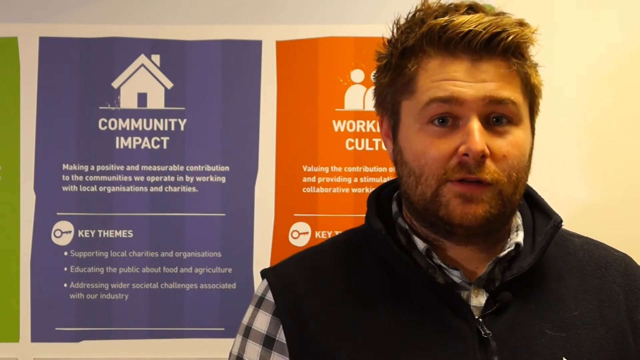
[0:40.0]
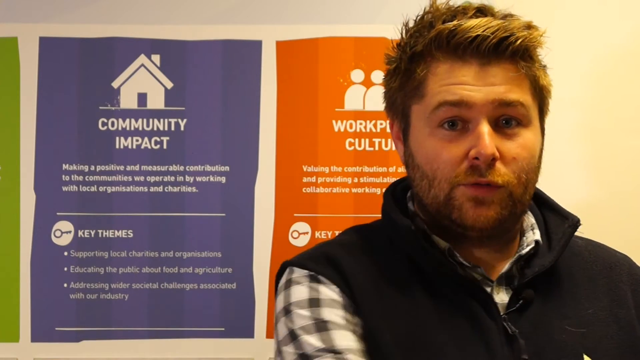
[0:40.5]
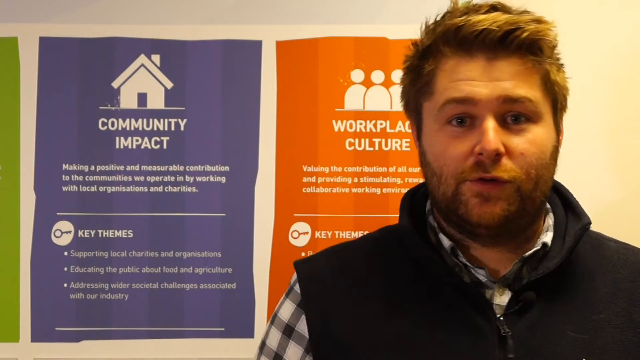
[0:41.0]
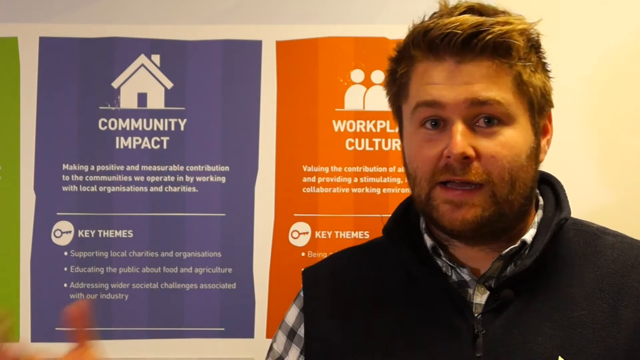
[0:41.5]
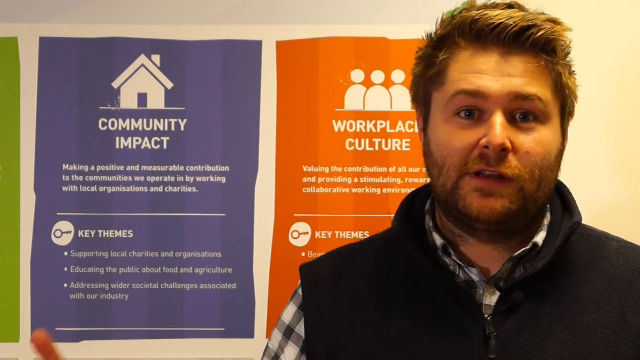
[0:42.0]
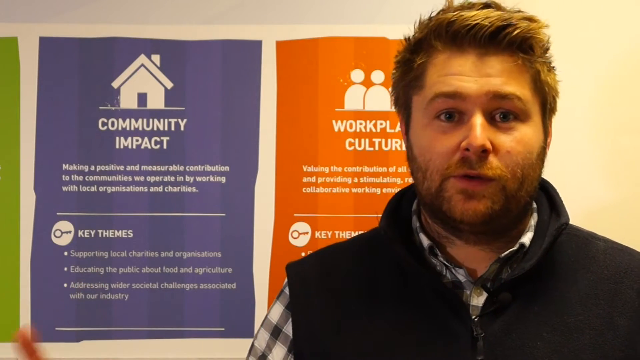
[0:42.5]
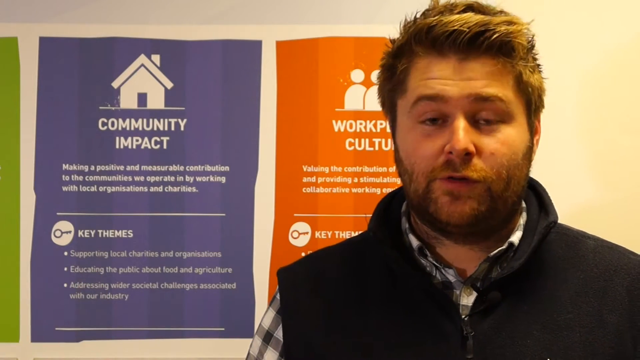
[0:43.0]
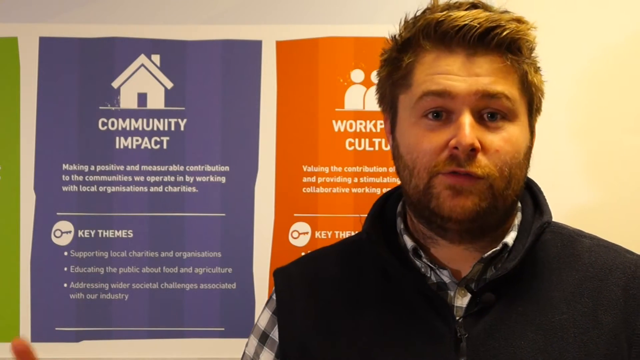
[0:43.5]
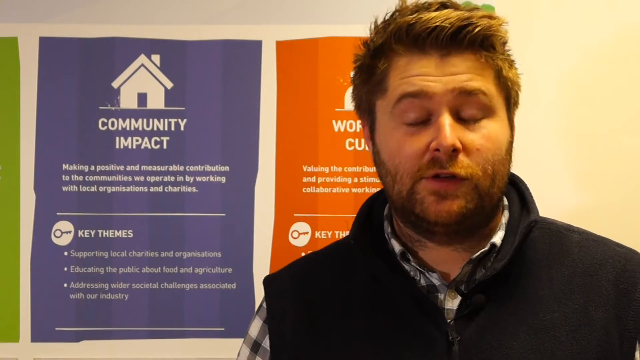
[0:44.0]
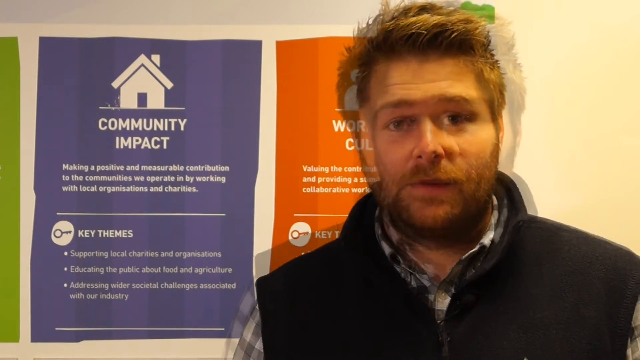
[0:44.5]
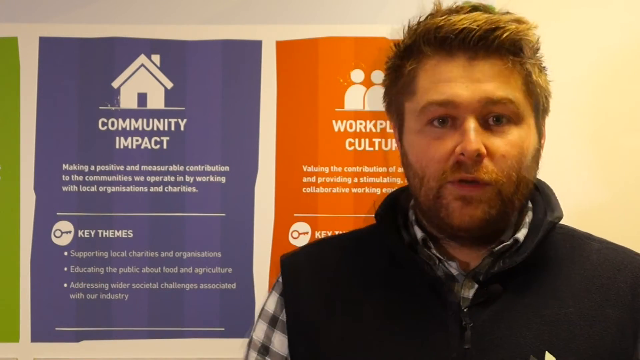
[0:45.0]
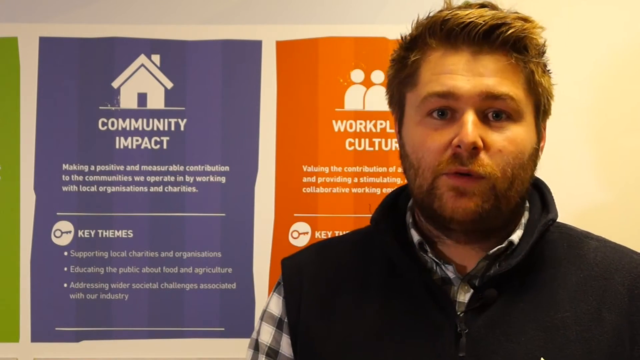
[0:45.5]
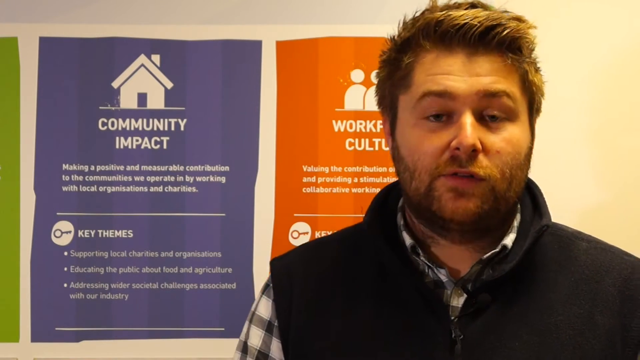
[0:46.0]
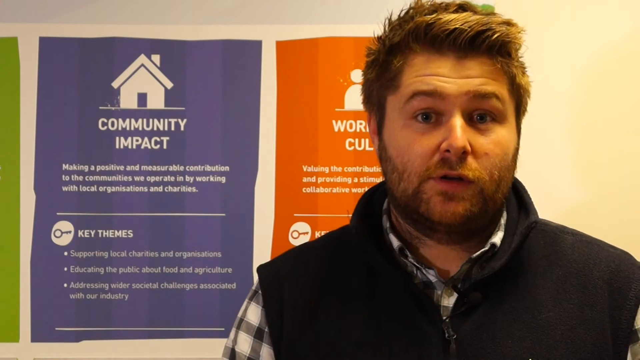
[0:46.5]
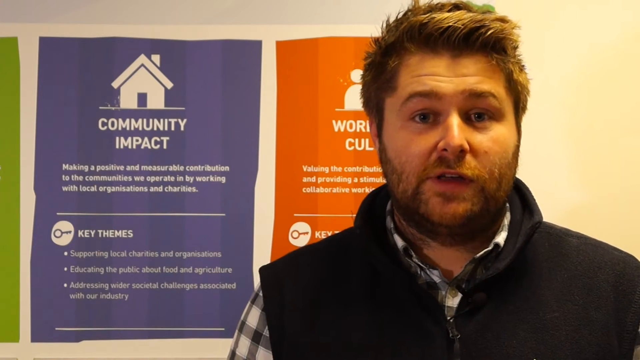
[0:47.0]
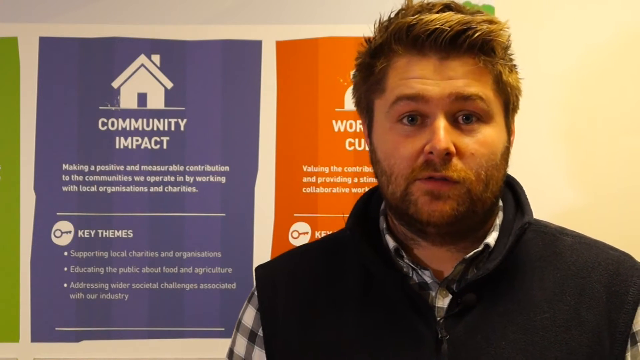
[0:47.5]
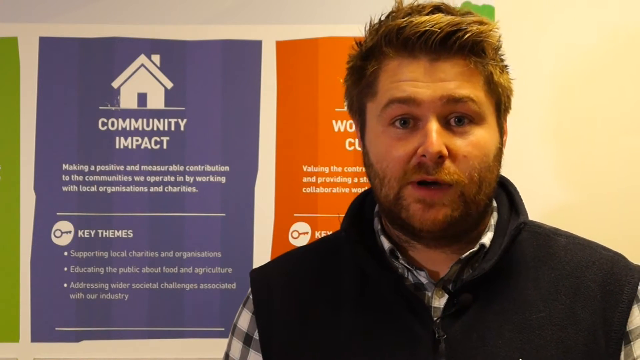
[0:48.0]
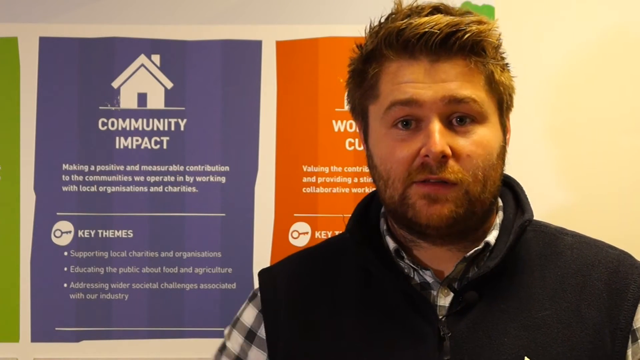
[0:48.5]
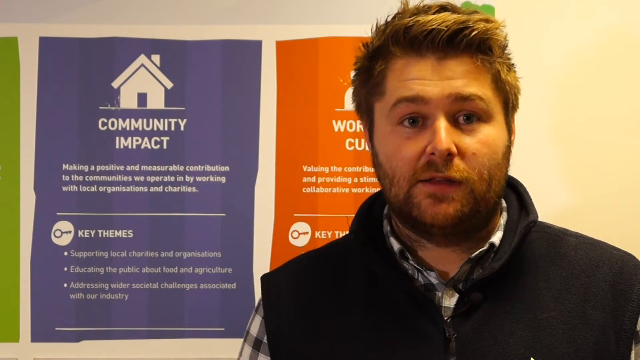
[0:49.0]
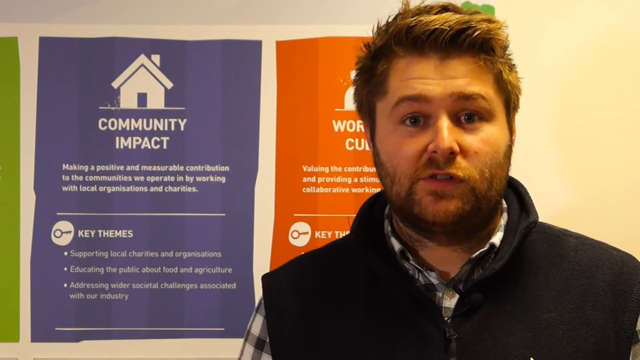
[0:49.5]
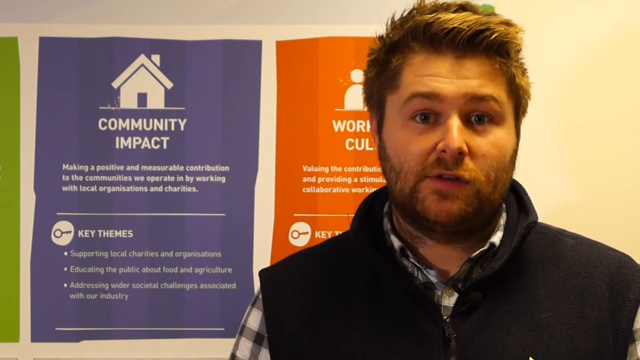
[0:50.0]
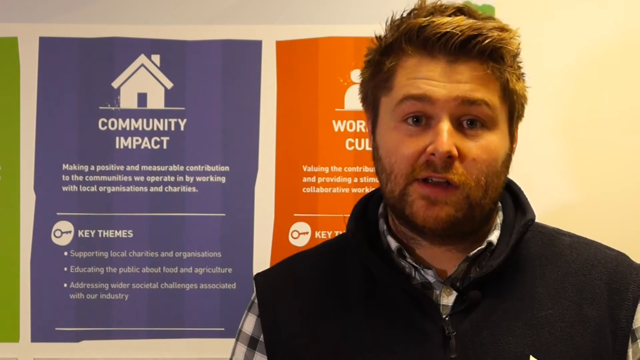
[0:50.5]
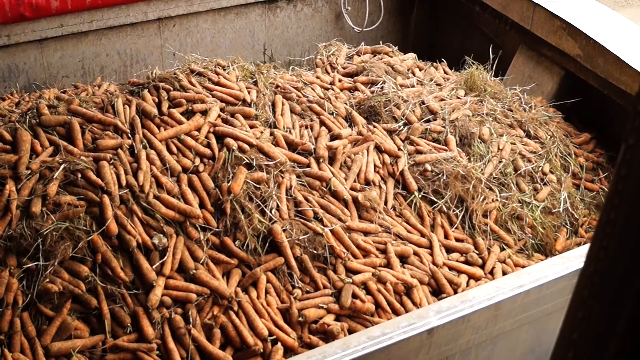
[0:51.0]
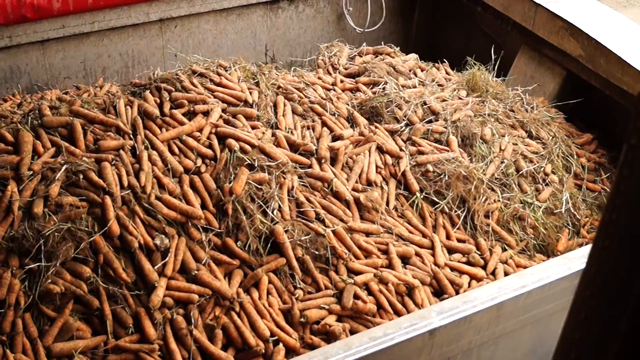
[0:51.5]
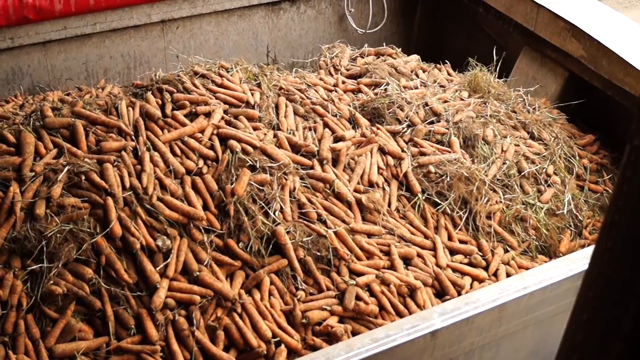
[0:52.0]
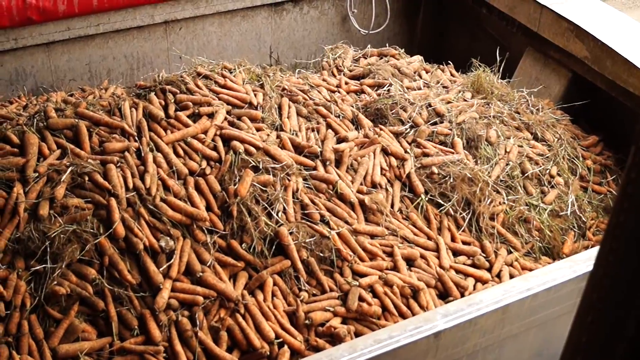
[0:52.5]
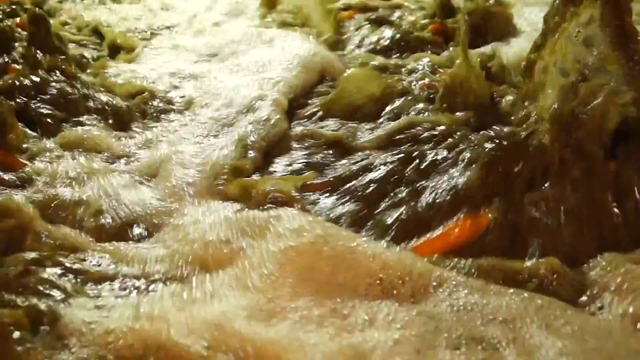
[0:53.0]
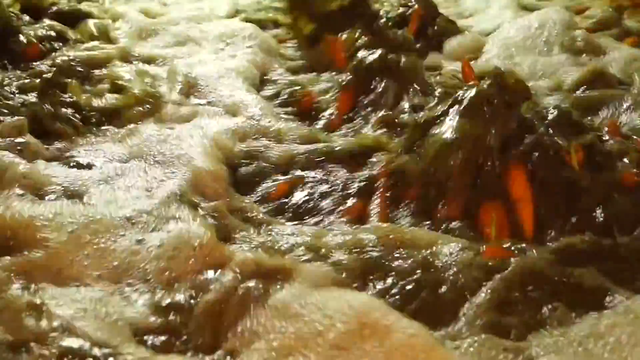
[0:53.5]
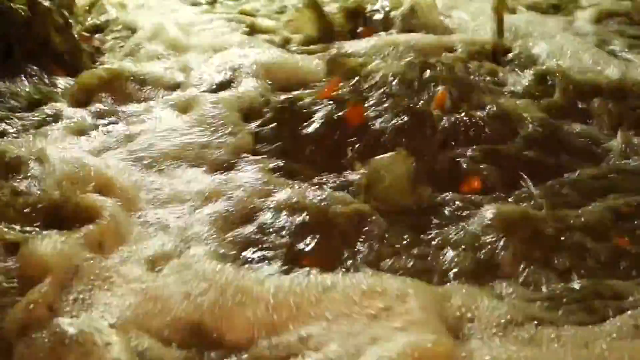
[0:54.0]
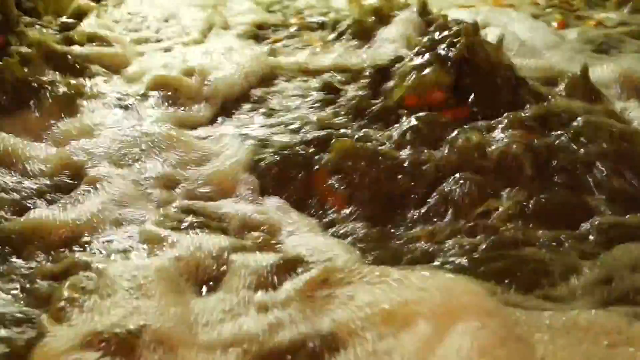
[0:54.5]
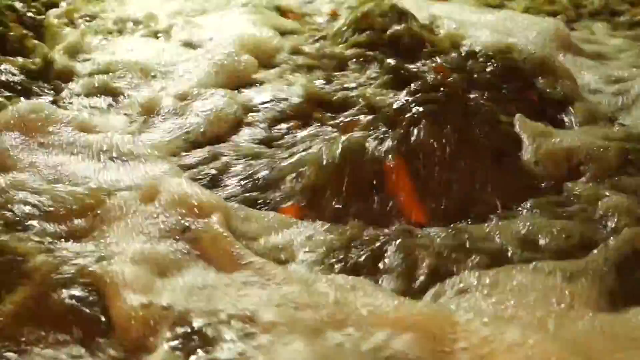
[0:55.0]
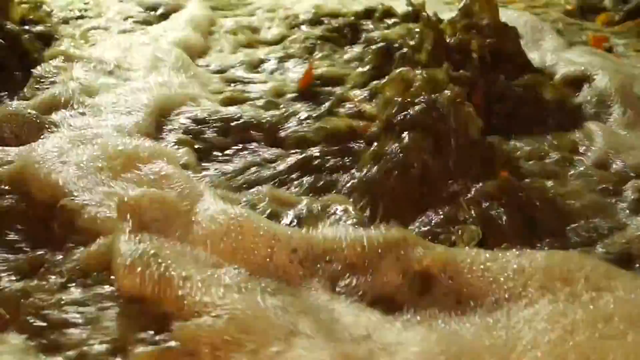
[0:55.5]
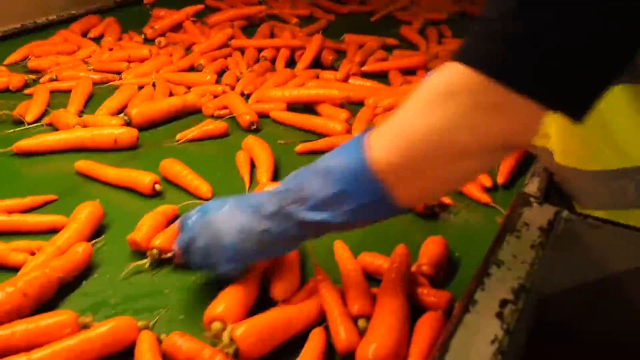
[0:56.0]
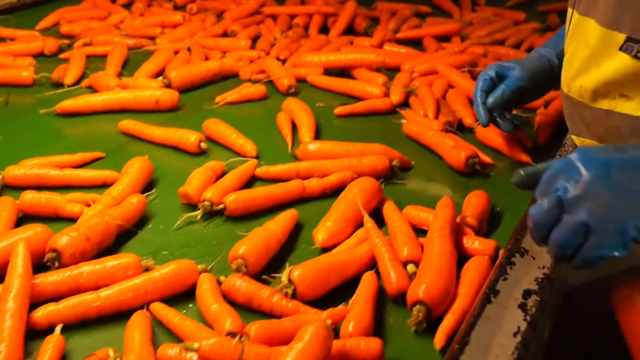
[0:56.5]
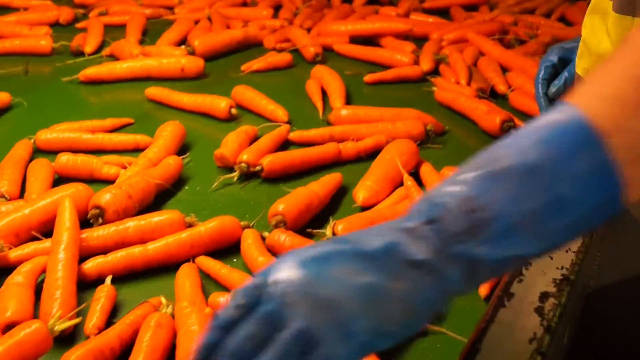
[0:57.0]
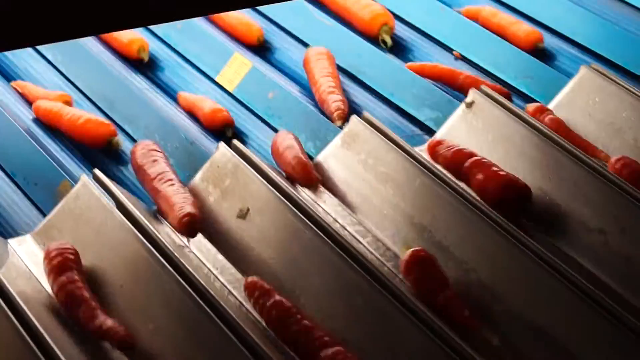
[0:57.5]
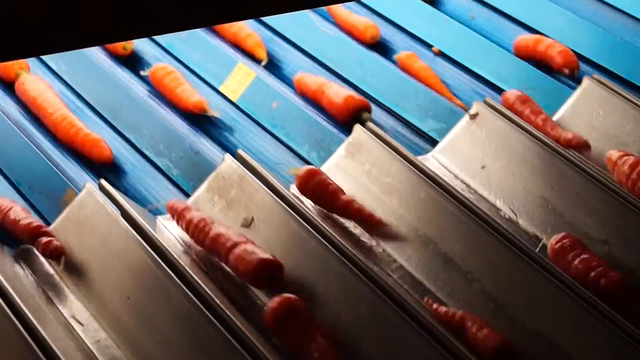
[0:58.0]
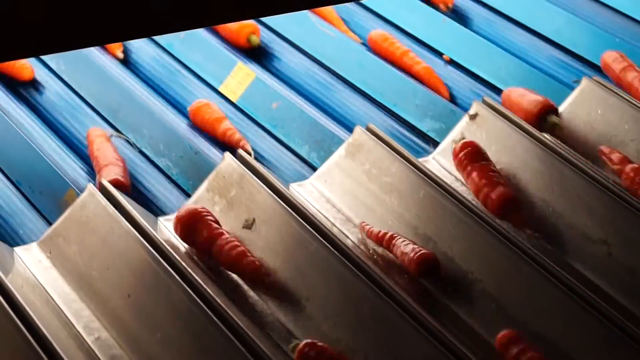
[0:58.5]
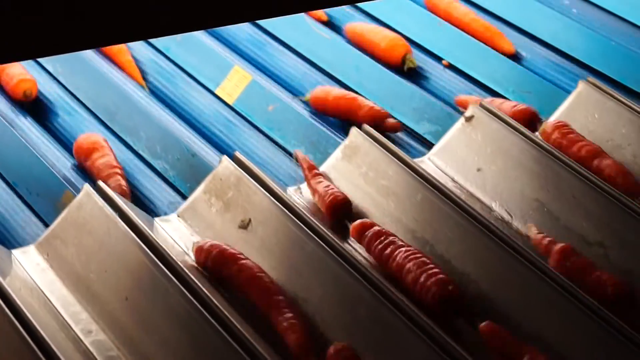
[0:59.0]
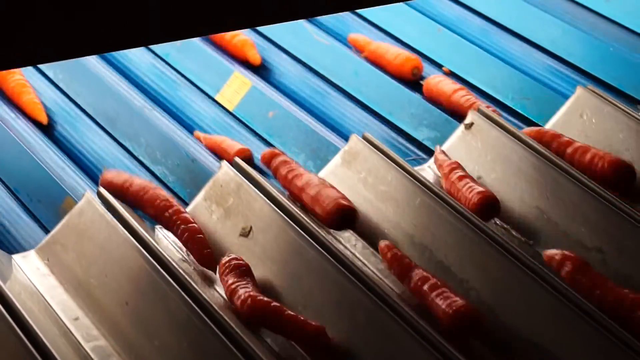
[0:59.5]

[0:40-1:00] Guy Thallon speaks to the camera, with the number four life values behind him; parts of the green, blue and orange shapes are in view. Carrots appear in a giant metal container before being washed and processed. They are very dirty and are shown being washed. They then travel along a conveyor belt while a worker sorts through them, apparently choosing good from bad, and throws some of them off the belt. The carrots then go down a conveyor belt that looks like a corrugated slide, and the video returns to Guy Thallon talking.